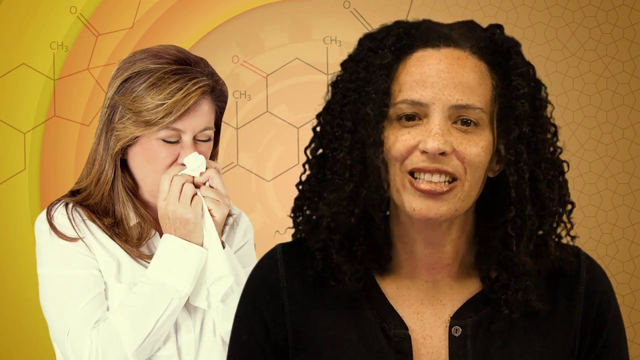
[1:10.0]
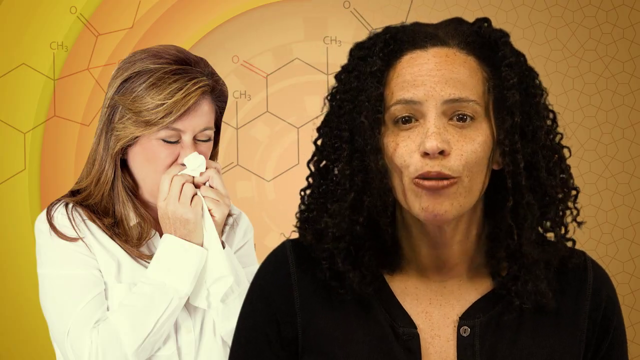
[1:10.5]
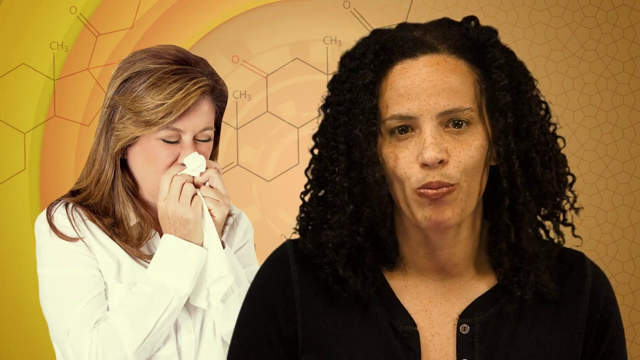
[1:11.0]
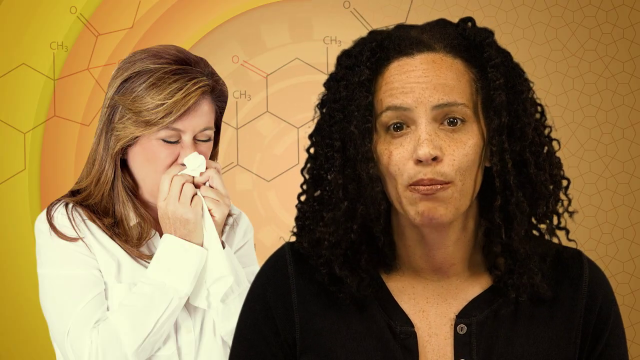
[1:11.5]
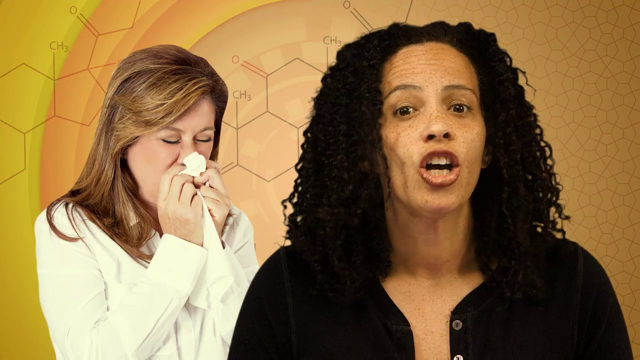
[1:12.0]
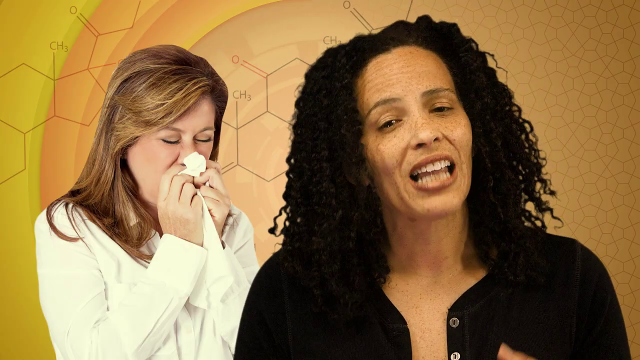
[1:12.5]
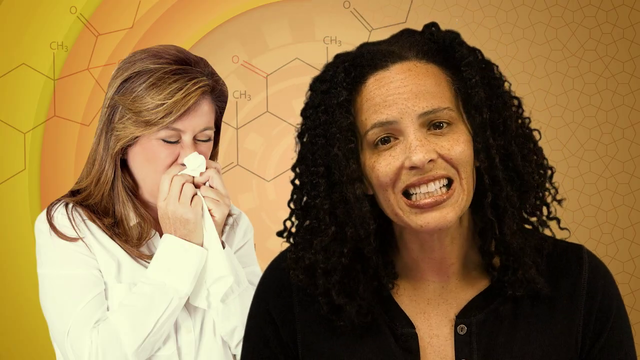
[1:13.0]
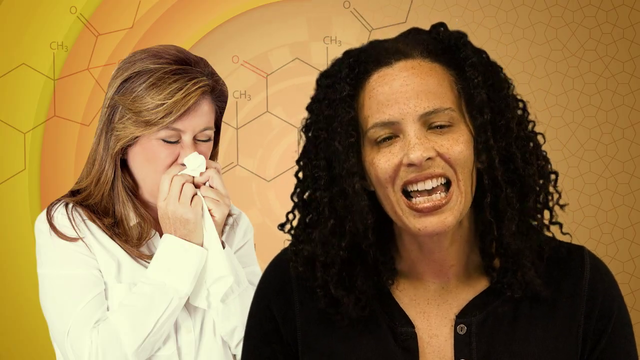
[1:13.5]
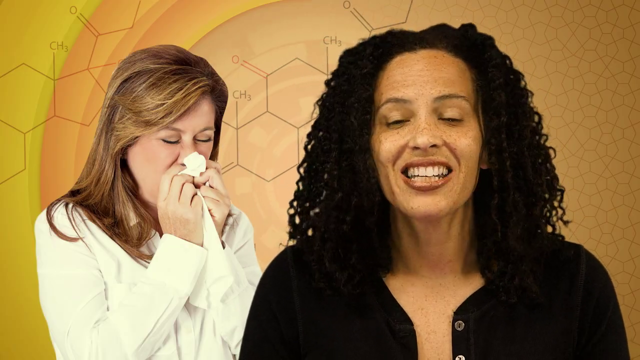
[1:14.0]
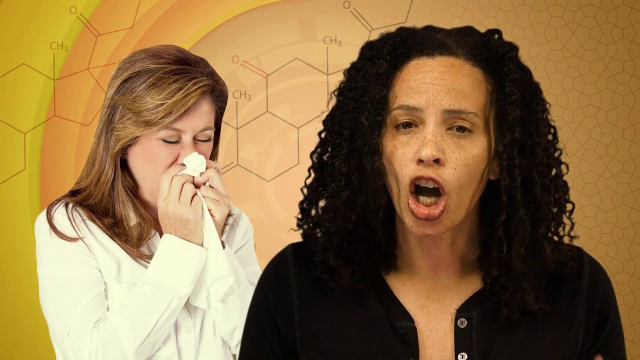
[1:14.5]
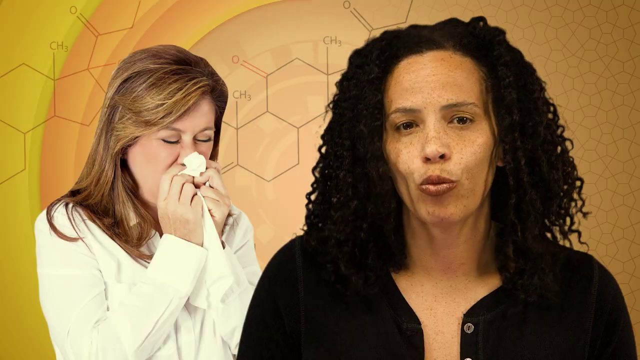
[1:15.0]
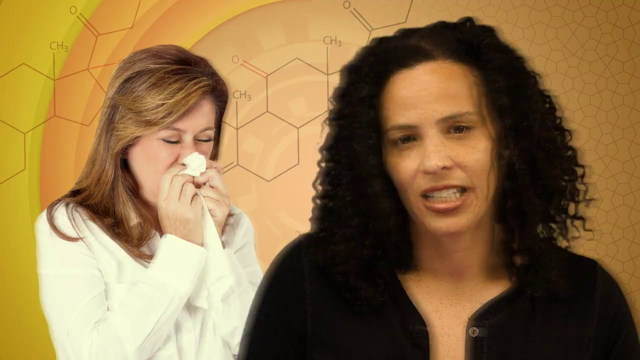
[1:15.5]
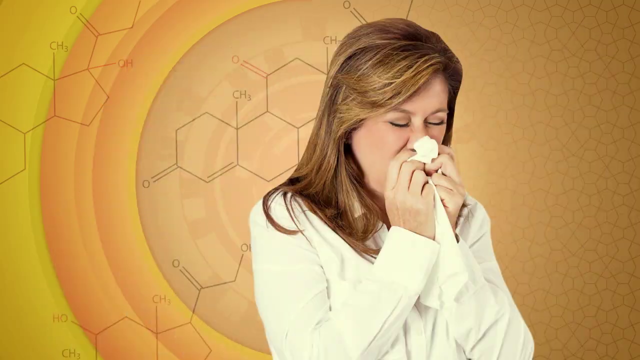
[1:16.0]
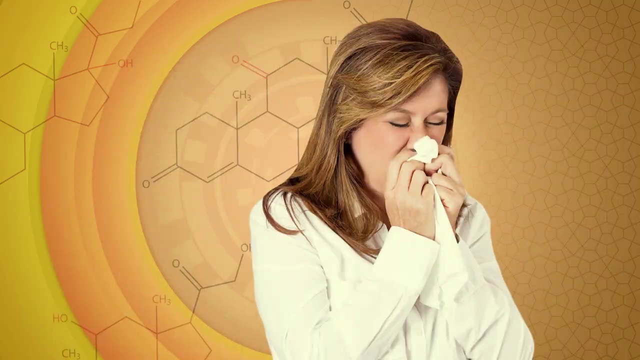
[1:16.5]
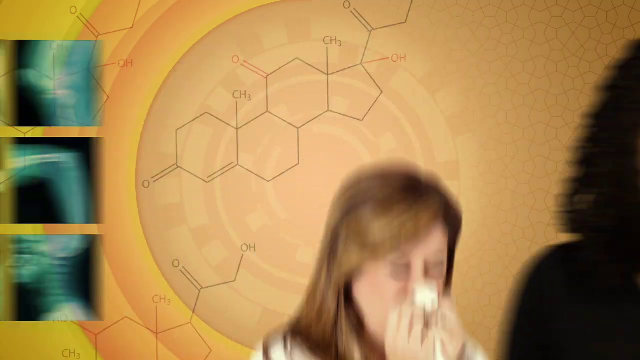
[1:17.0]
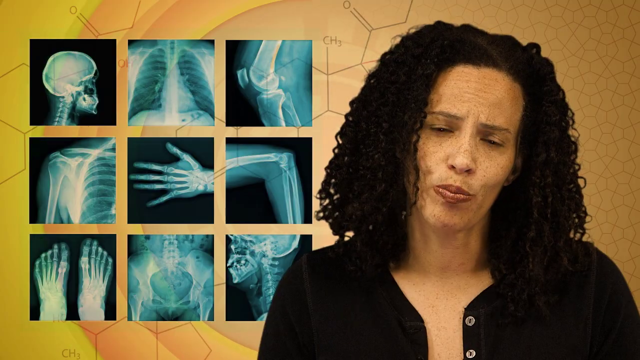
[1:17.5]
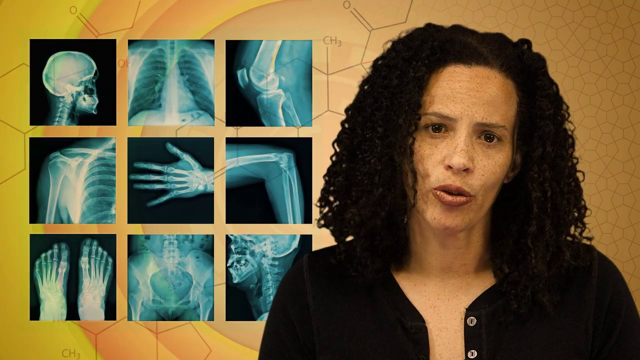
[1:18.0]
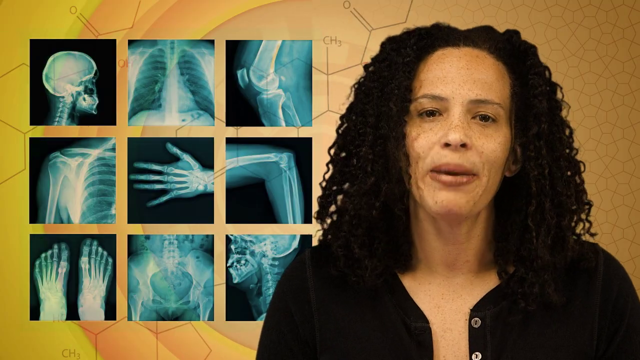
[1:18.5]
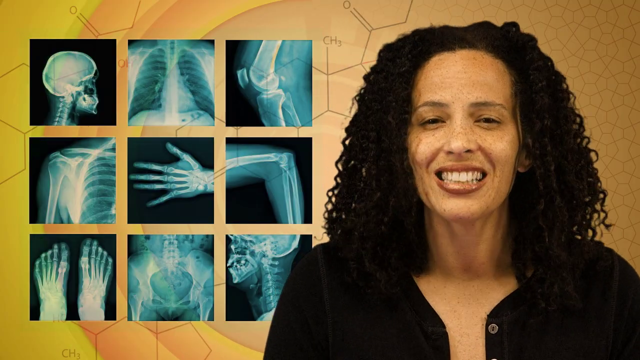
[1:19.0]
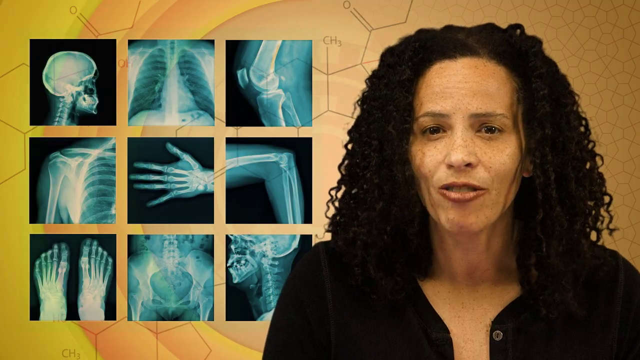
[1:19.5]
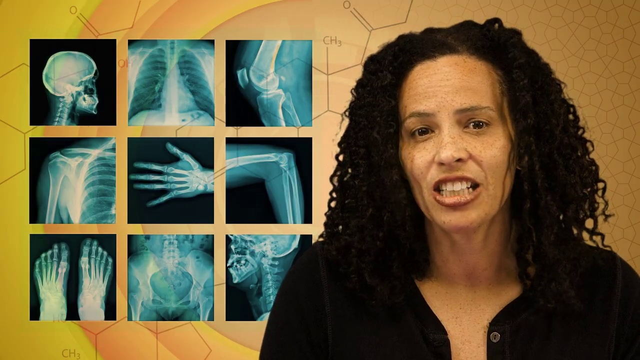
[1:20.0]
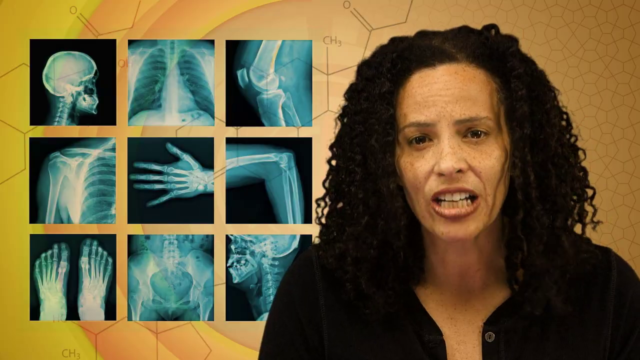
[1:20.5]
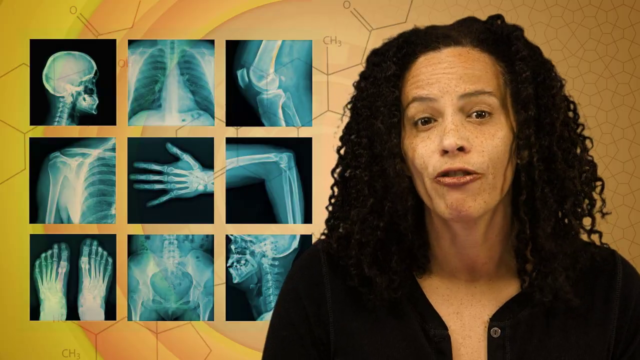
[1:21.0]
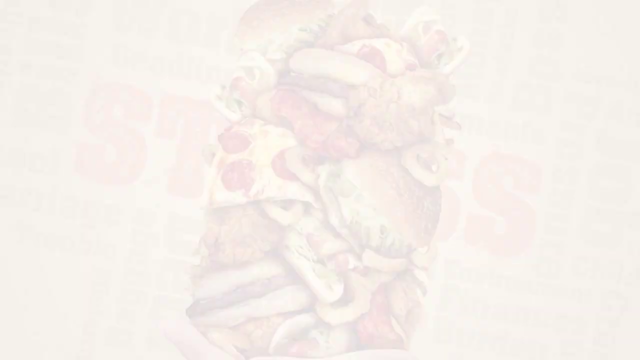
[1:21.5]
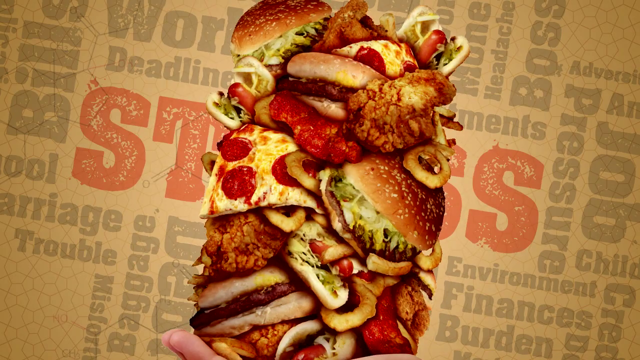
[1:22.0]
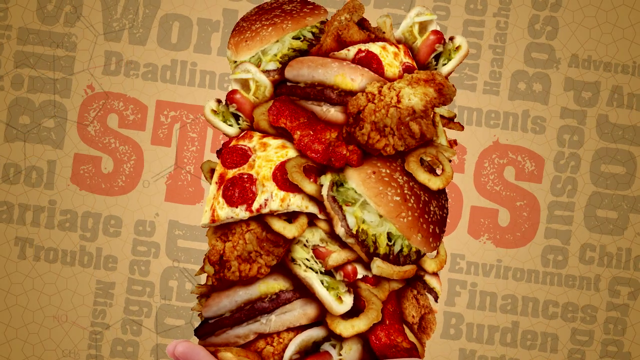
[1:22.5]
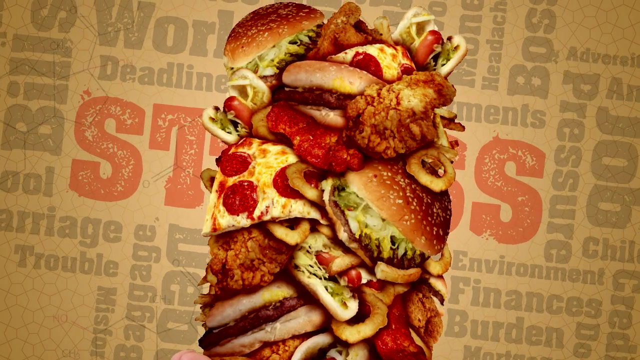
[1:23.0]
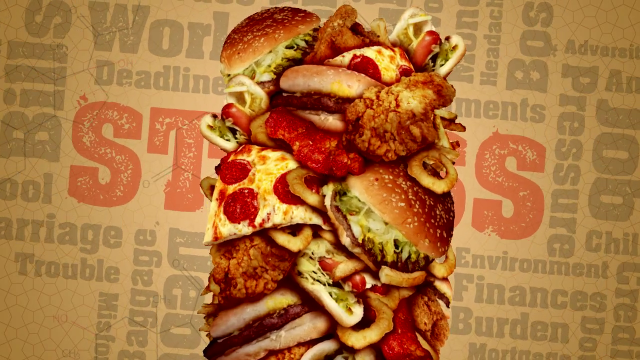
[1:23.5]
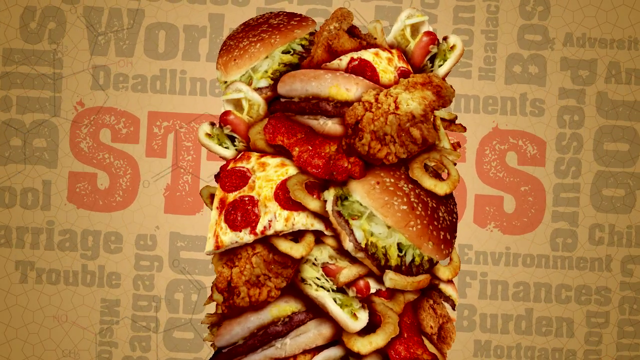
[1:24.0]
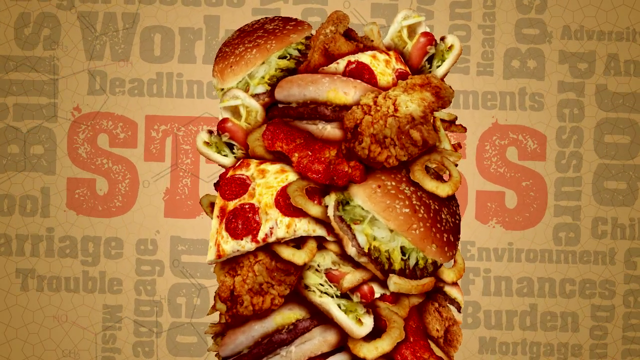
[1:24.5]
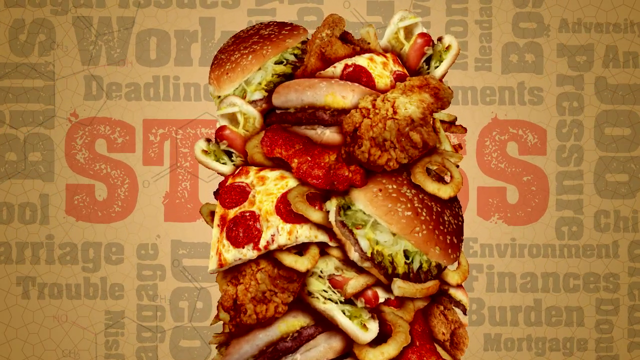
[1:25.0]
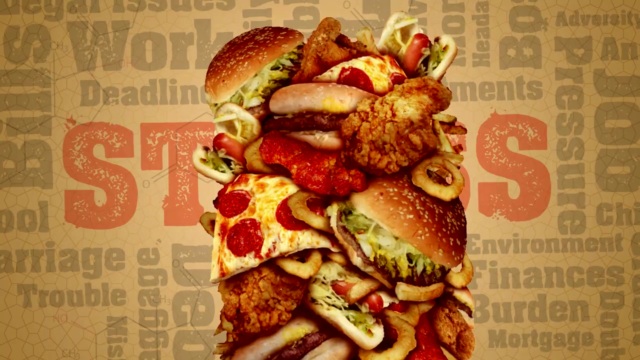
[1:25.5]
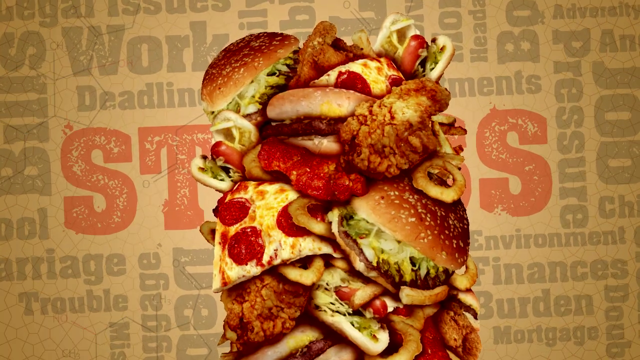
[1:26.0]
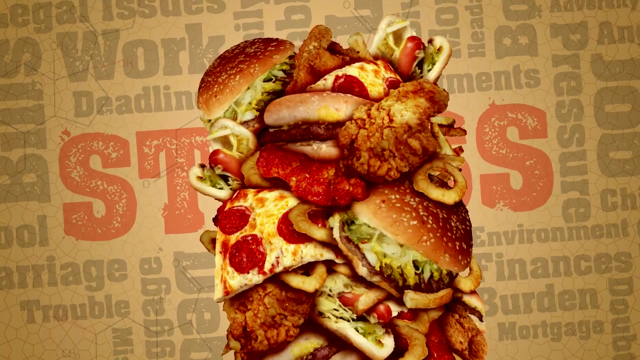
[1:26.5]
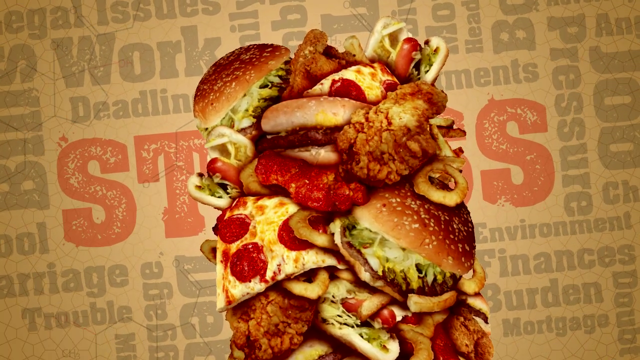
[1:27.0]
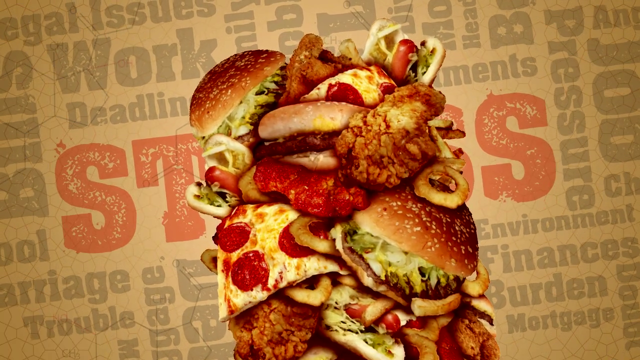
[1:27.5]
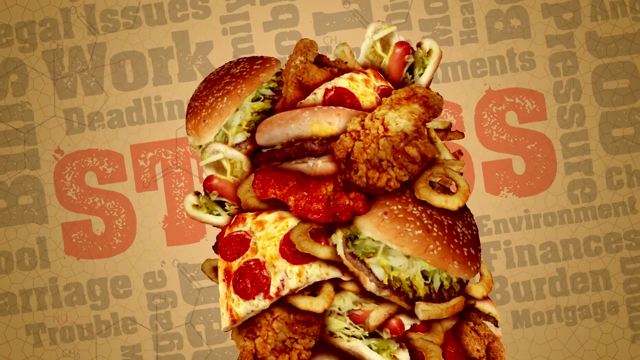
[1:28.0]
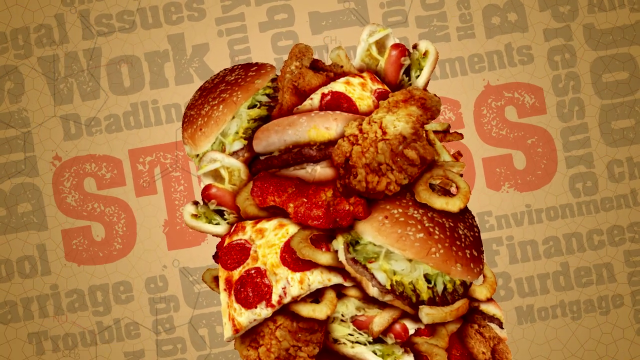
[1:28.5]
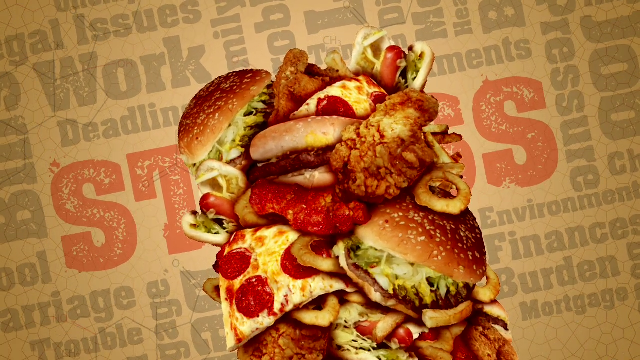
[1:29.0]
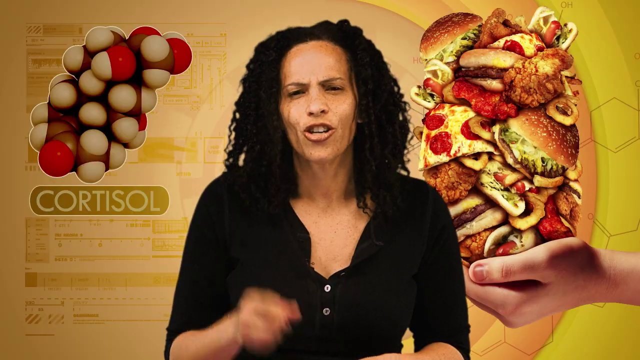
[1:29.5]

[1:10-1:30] The woman talks facing the viewer on the right side. On the left is an image of a woman blowing her nose with a white tissue; she has light brown hair with highlights and wears what looks like a white jacket. The image moves to the right and disappears, replaced by nine x-ray pictures on the left: a human skull at the top with a ribcage next to it, a knee, a hand, and the feet in the bottom left. The woman continues talking on the right, facing the viewer and very close. The scene changes to a pile of greasy foods in the middle, including a slice of pizza, a hamburger and fried chicken. Behind them are many negative words, such as "pressure," "deadlines," "work," "job," "finances," "burden," "trouble," "marriage" and "bills," with the word "stress" very large and in red in the middle of the background.